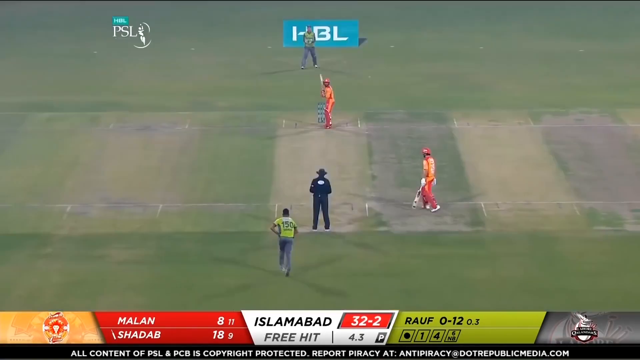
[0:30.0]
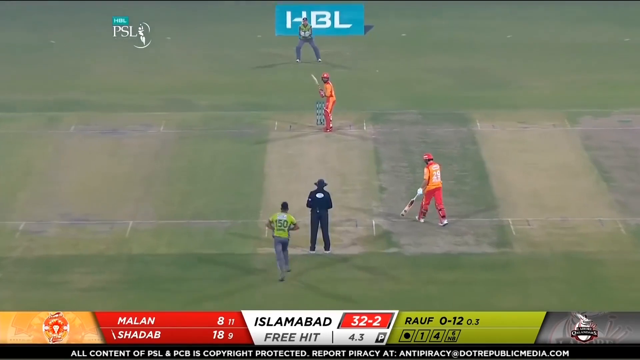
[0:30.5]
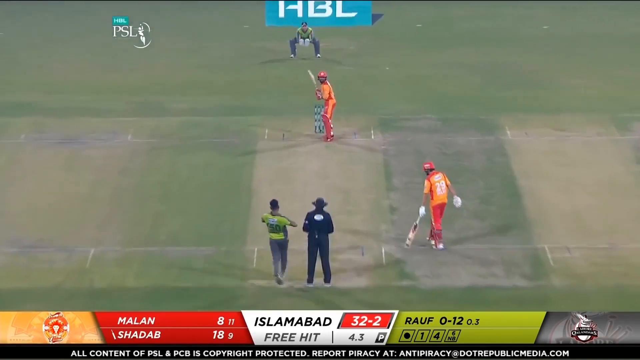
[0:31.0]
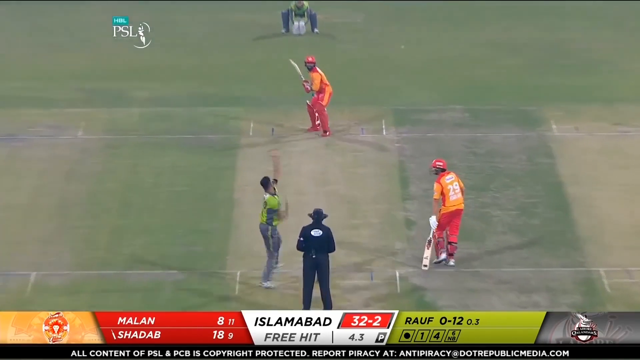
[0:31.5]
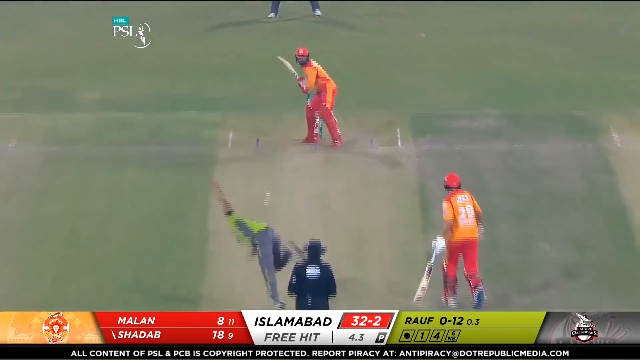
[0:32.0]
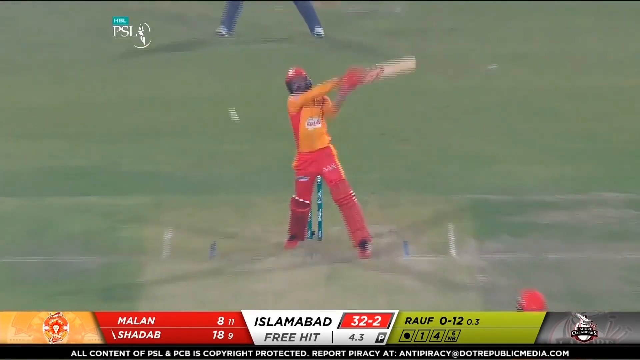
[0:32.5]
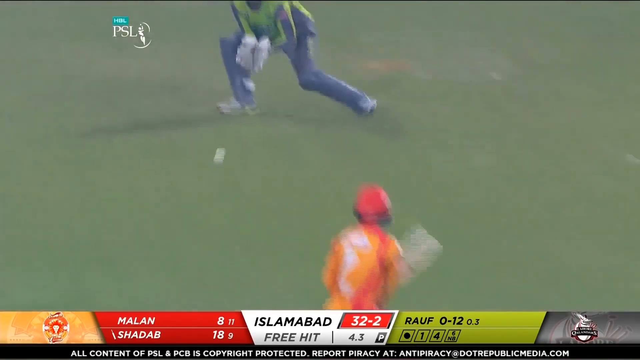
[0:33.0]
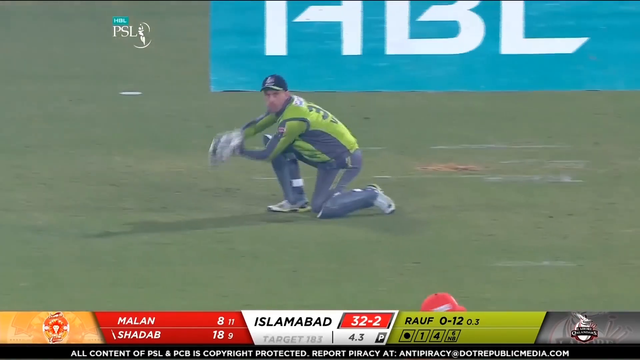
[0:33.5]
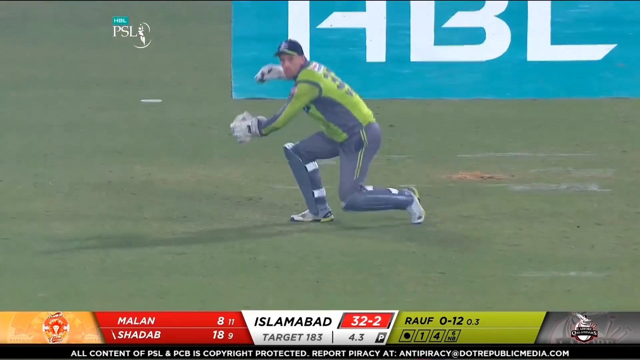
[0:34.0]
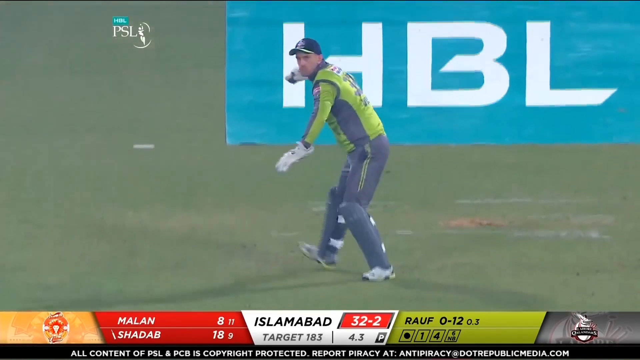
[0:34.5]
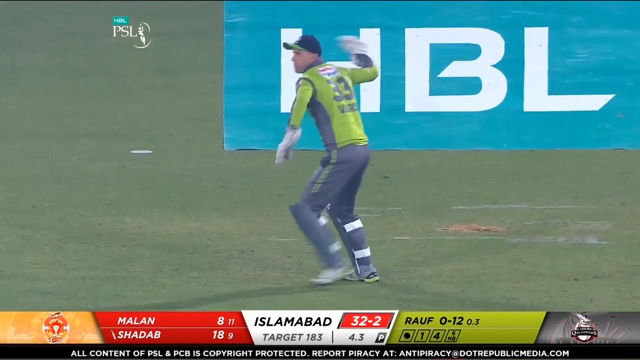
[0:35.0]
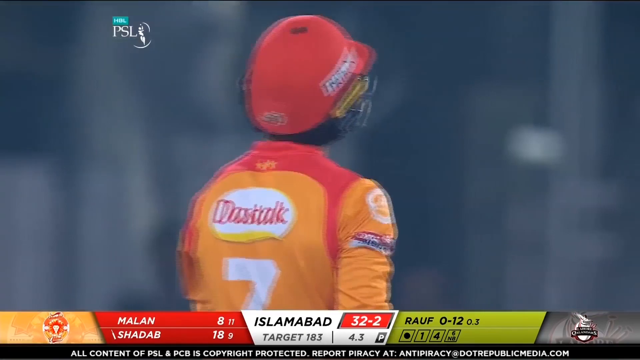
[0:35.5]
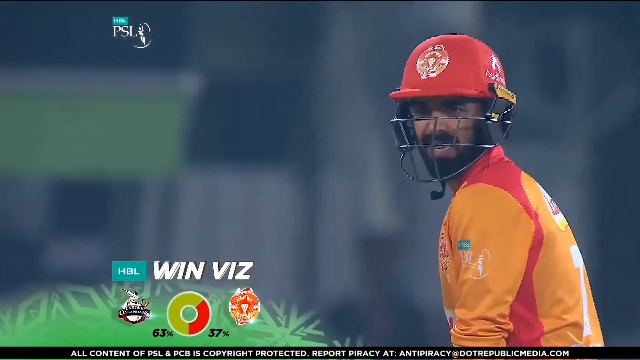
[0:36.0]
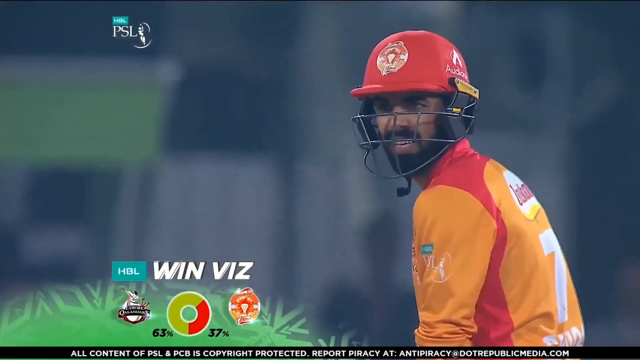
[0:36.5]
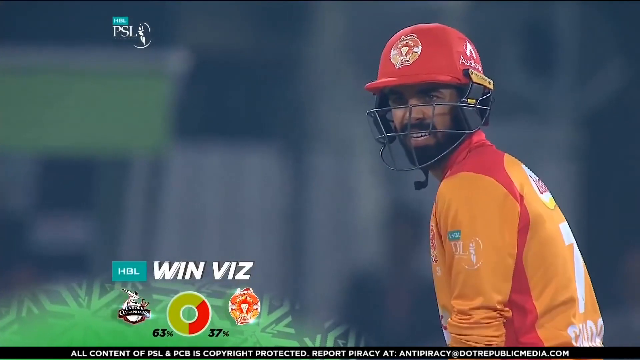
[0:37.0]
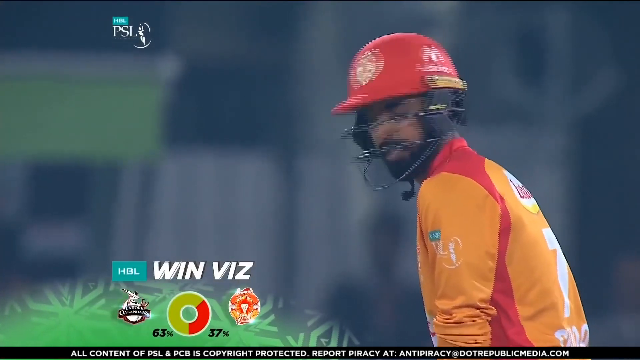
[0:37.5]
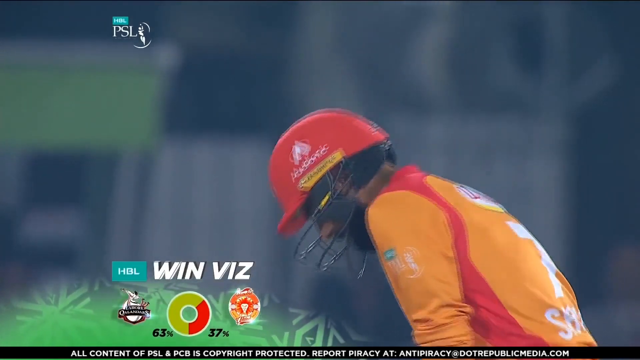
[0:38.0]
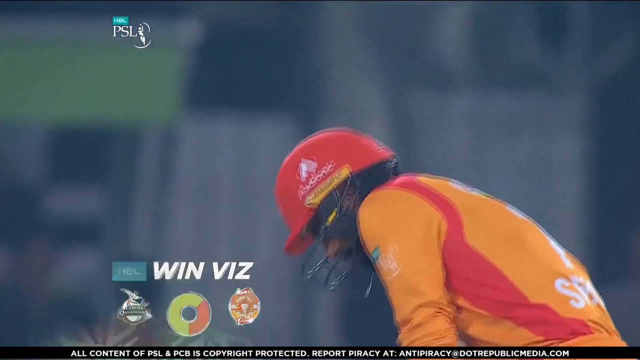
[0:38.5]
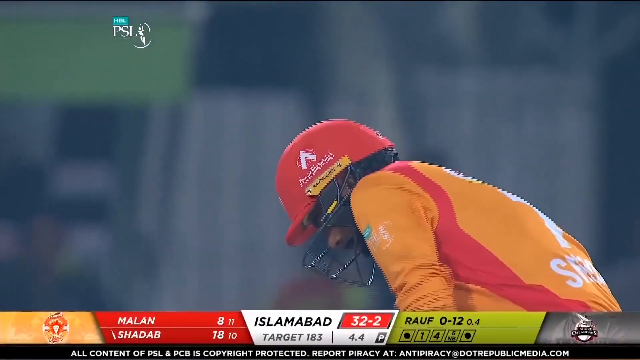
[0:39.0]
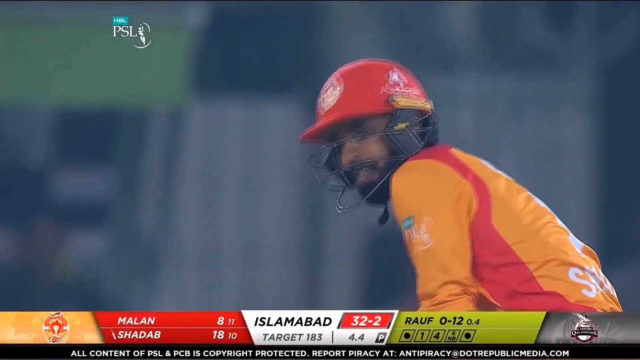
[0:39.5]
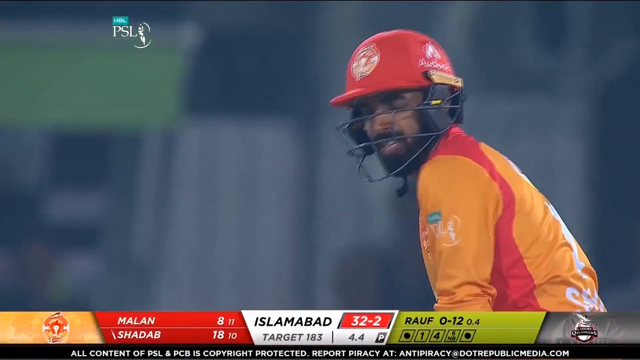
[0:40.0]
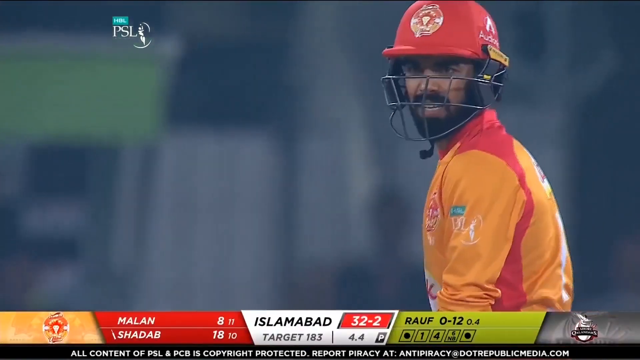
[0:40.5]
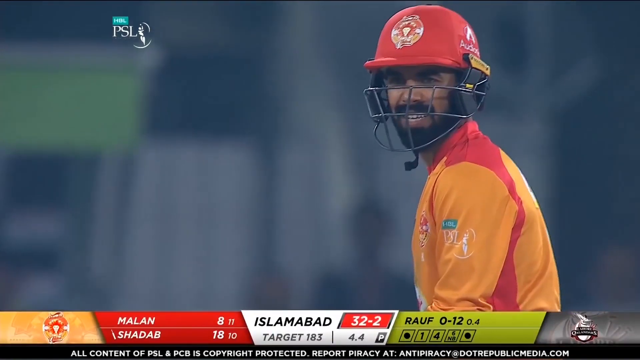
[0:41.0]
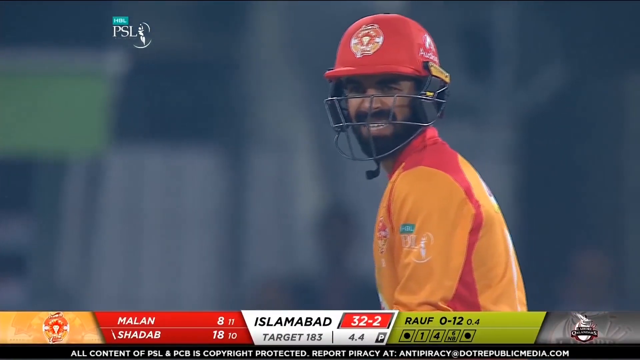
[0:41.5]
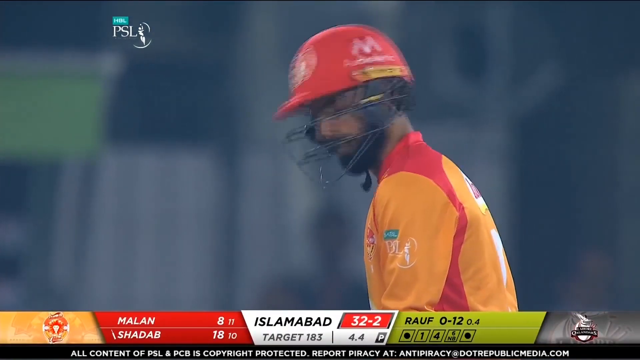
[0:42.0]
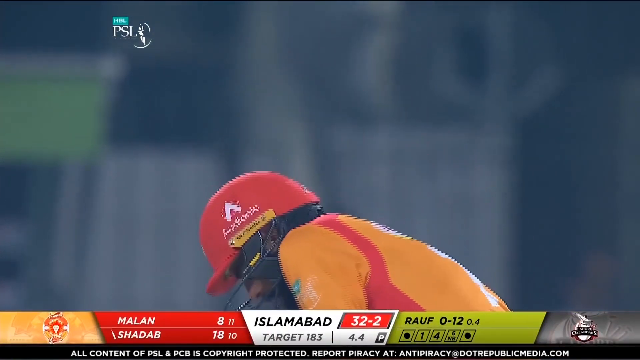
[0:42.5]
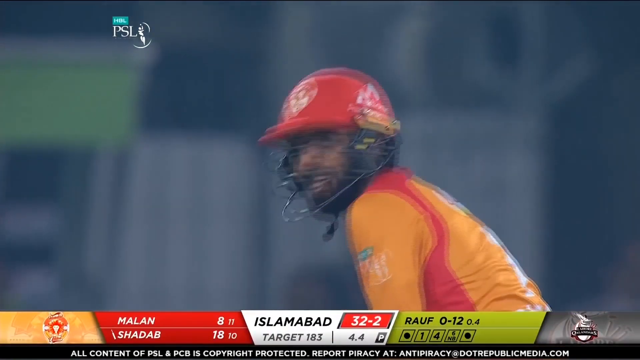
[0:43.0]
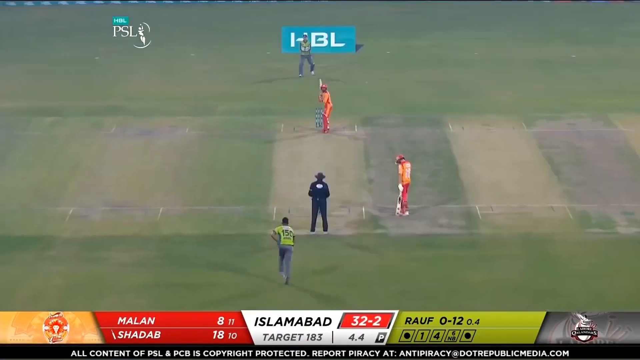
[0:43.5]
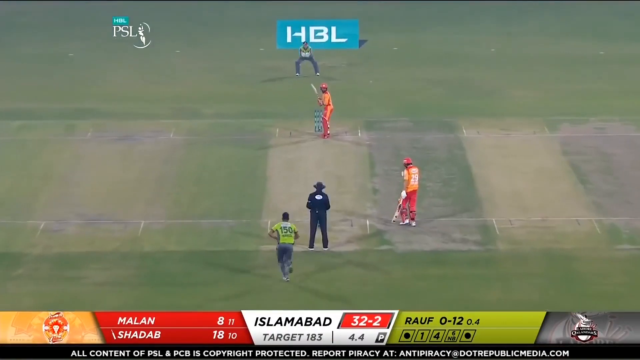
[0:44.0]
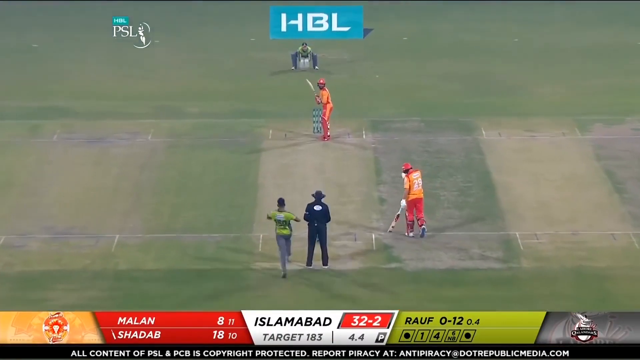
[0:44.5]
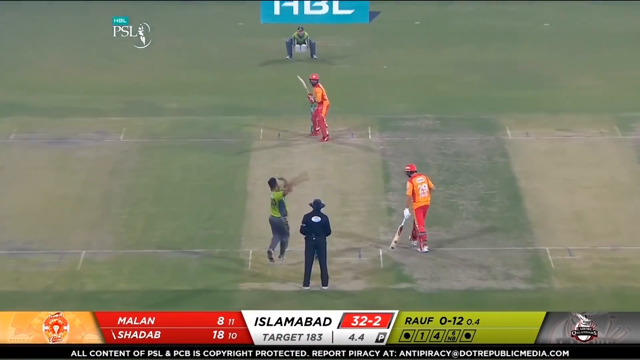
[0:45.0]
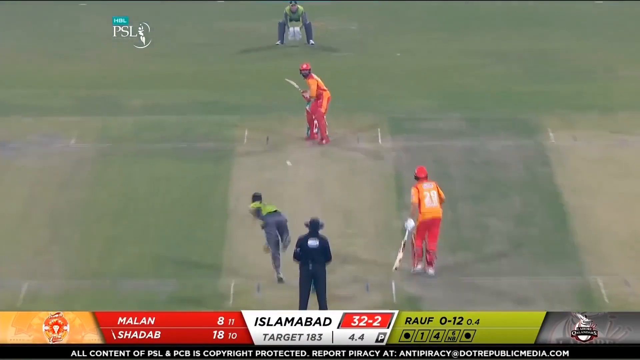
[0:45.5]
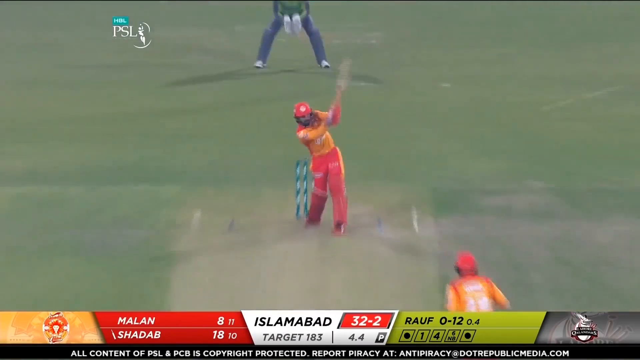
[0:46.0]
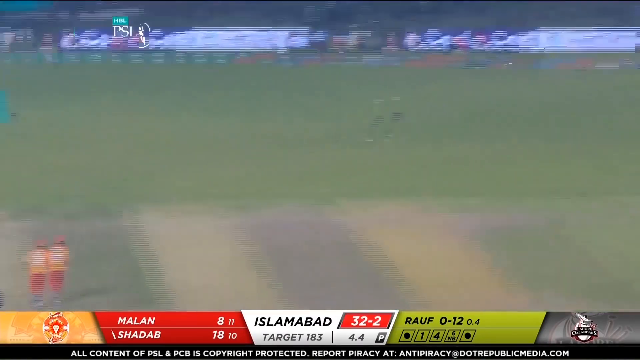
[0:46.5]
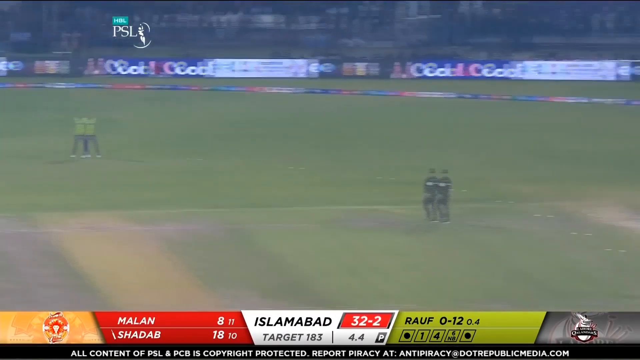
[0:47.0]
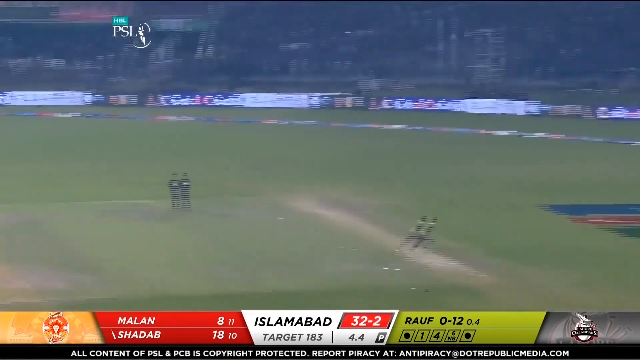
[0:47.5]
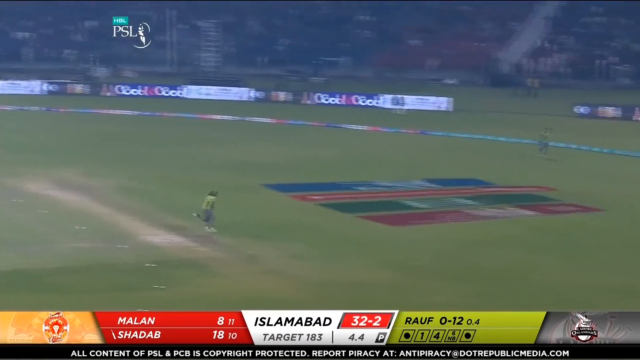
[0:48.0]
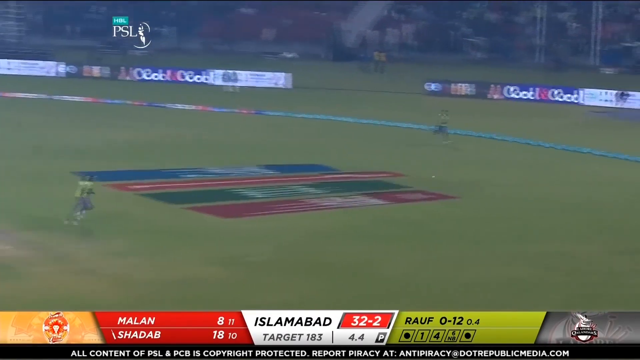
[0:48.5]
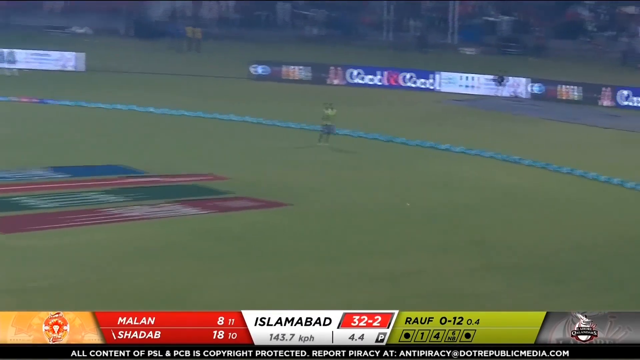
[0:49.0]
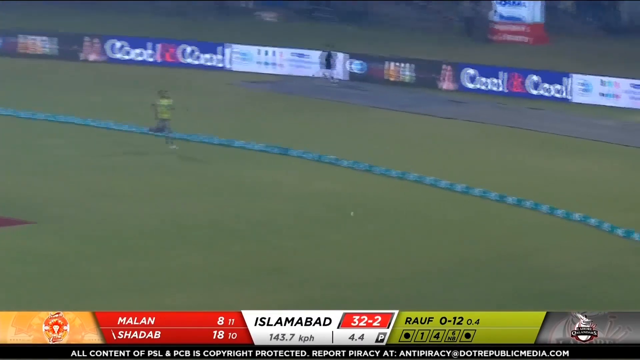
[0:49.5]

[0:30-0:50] The match has moved on a lot, apparently in highlights. Islamabad are on 32 runs with two wickets down; Shadab has scored 18 runs and Malan eight. In one delivery the batsman plays and misses. Shadab, batting right-handed, waits to face another delivery, looking down the wicket at the bowler. The bowler runs in quickly and delivers right-handed, and Shadab plays an easy shot for another four runs. A chance-of-winning statistic shows the opposition 63% likely to win and Islamabad at 37%. The bowler is named Rauf; he has taken no wickets and conceded 12 runs. The earlier six is shown to have been scored off a no ball.